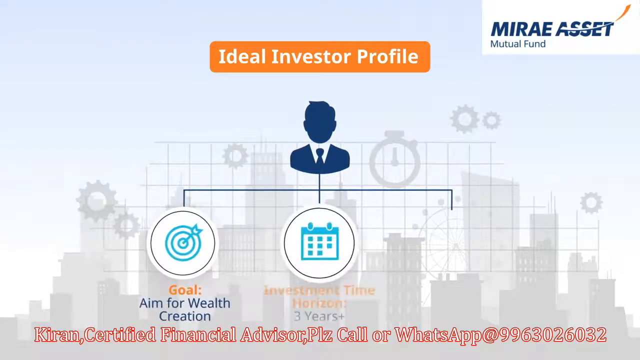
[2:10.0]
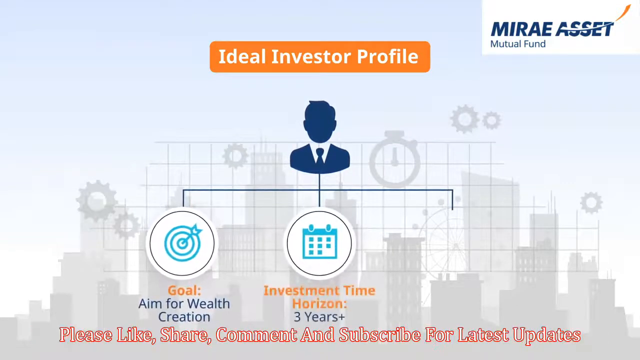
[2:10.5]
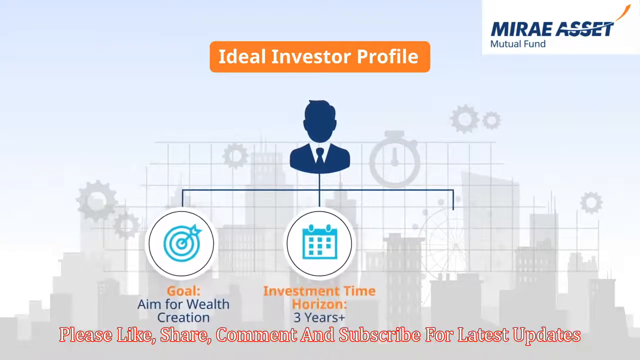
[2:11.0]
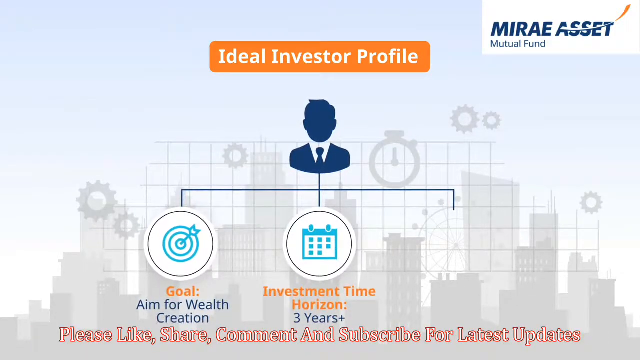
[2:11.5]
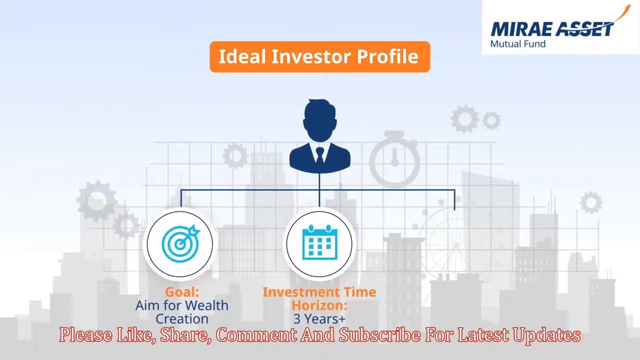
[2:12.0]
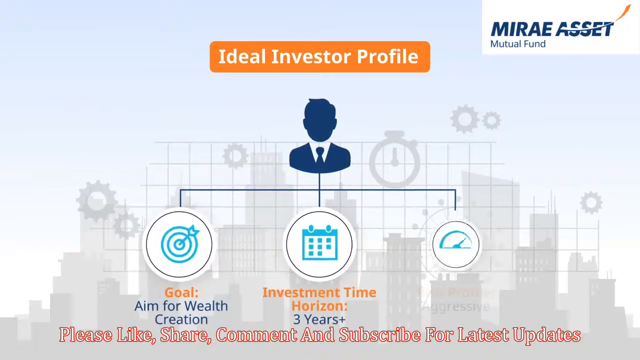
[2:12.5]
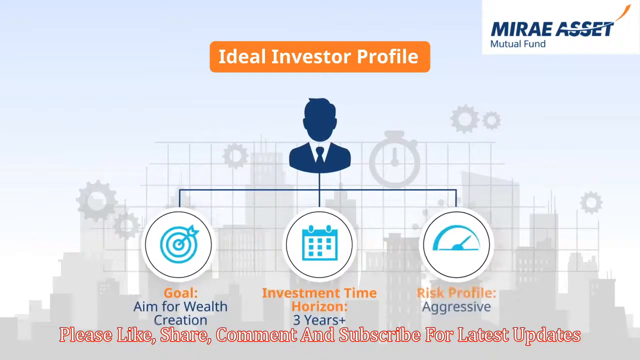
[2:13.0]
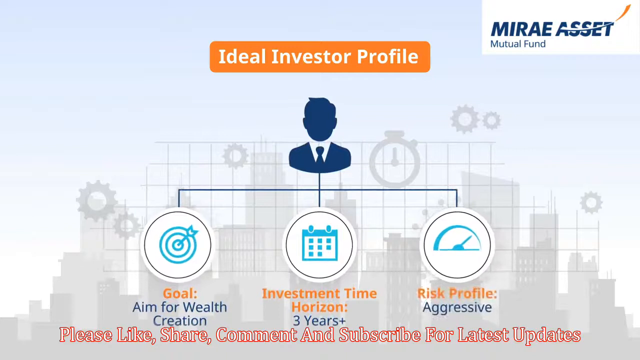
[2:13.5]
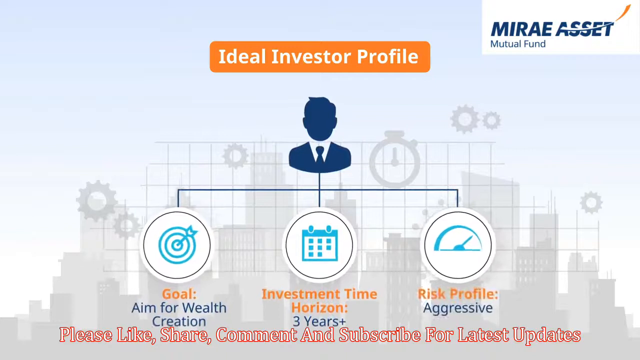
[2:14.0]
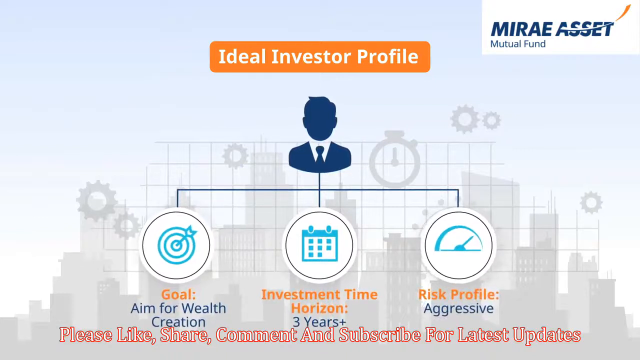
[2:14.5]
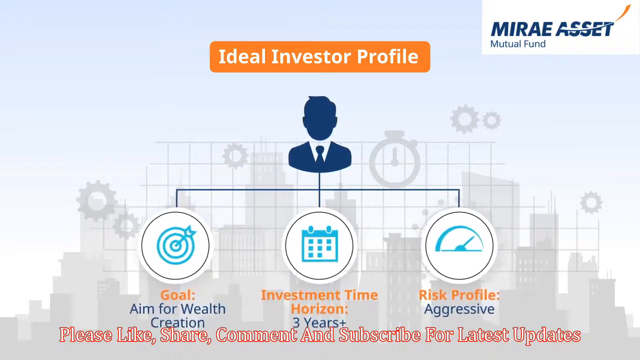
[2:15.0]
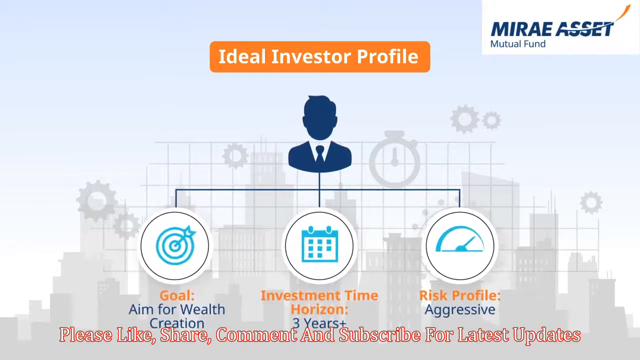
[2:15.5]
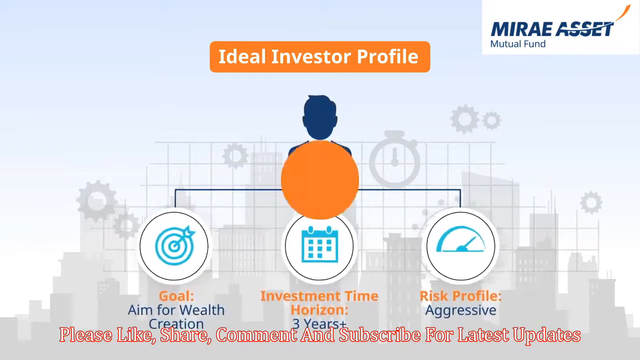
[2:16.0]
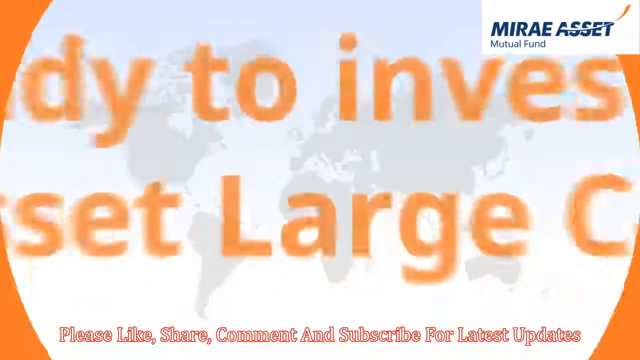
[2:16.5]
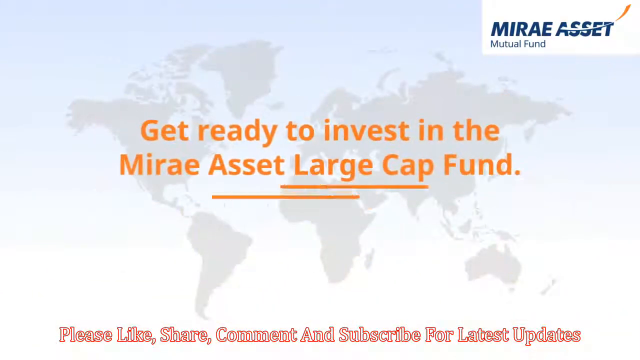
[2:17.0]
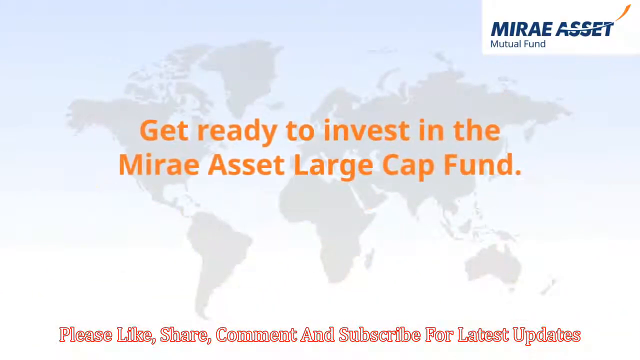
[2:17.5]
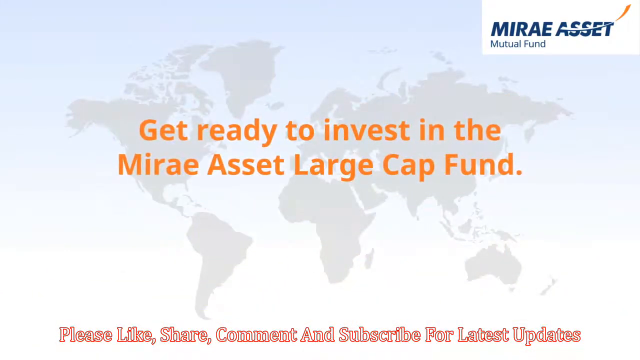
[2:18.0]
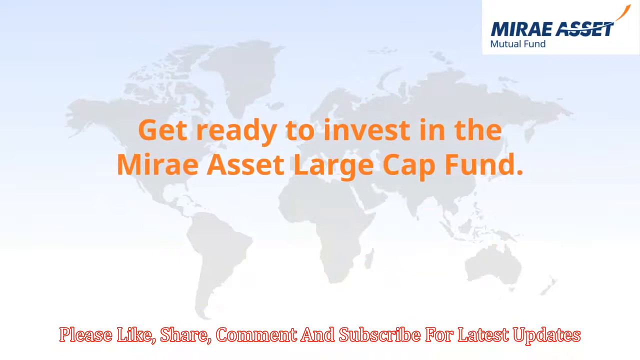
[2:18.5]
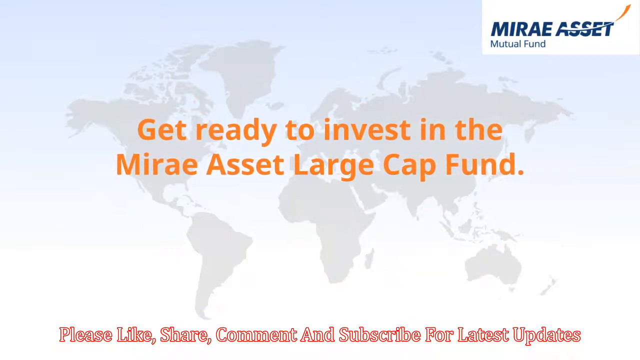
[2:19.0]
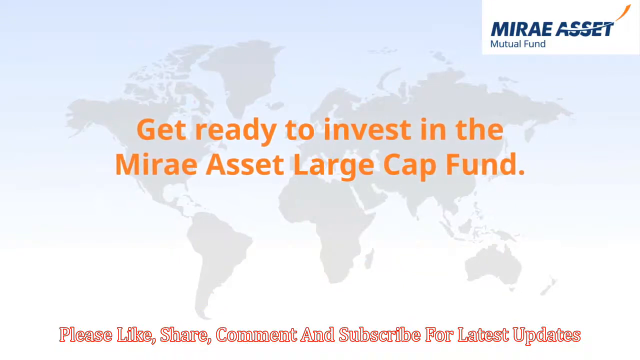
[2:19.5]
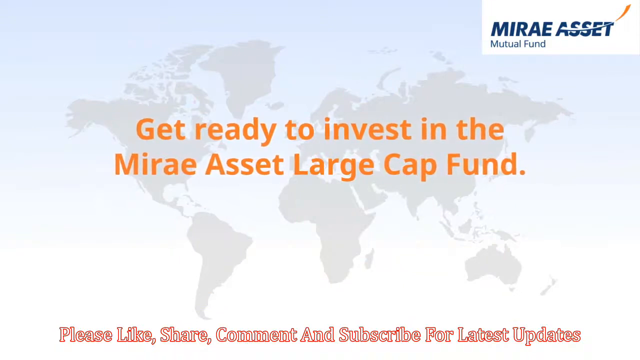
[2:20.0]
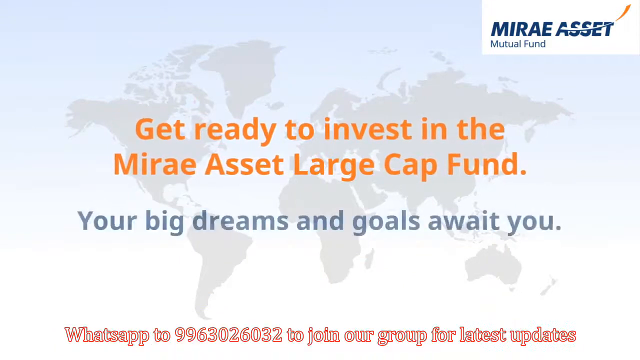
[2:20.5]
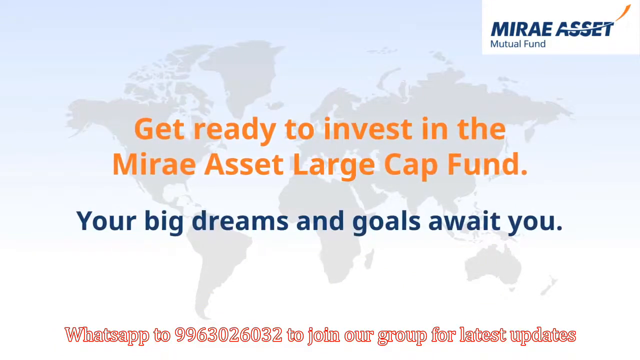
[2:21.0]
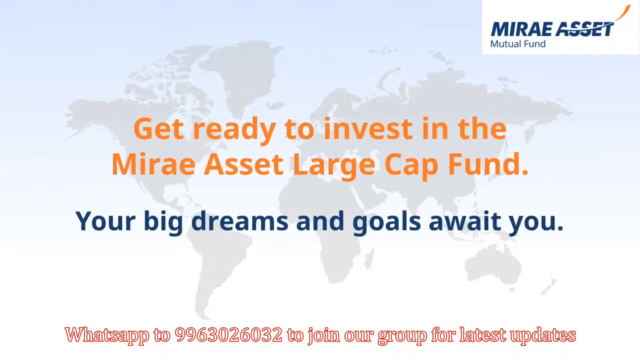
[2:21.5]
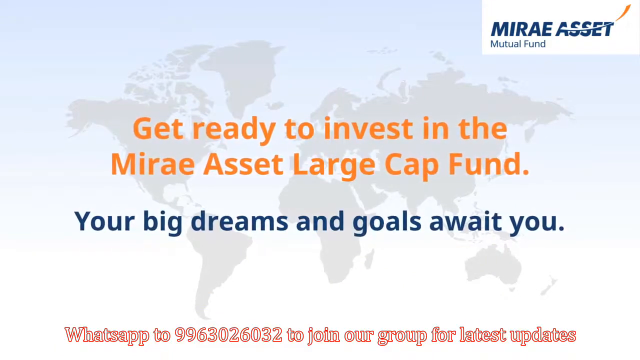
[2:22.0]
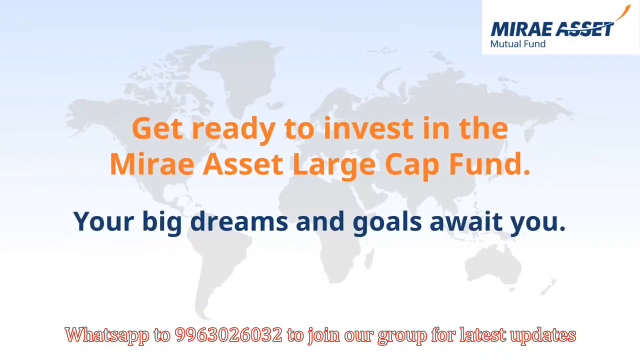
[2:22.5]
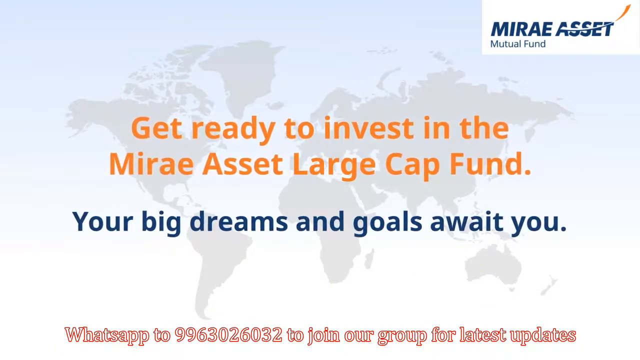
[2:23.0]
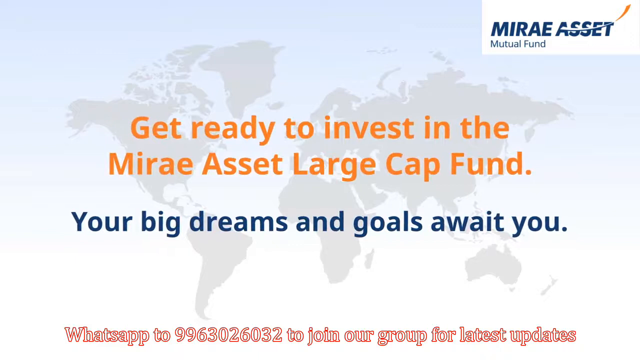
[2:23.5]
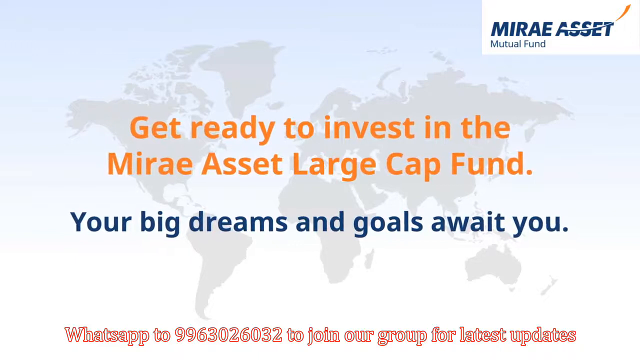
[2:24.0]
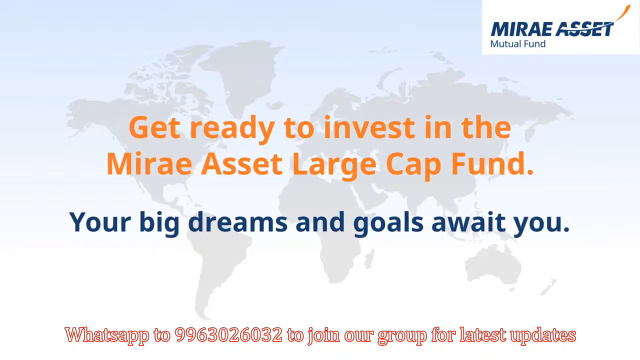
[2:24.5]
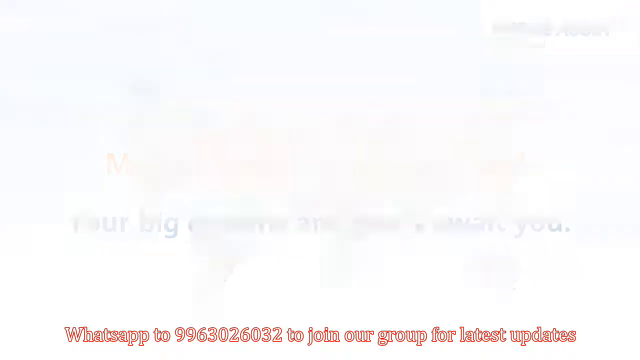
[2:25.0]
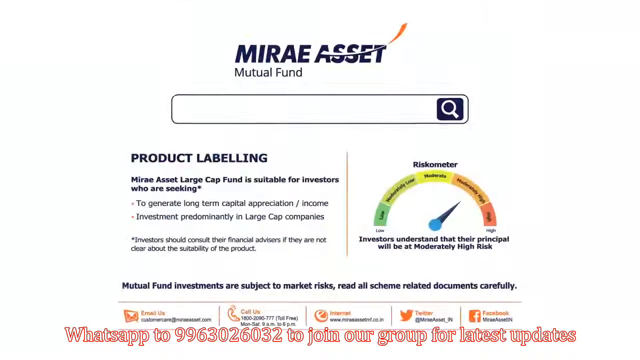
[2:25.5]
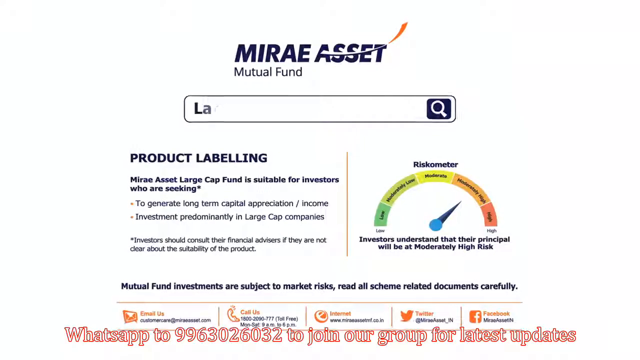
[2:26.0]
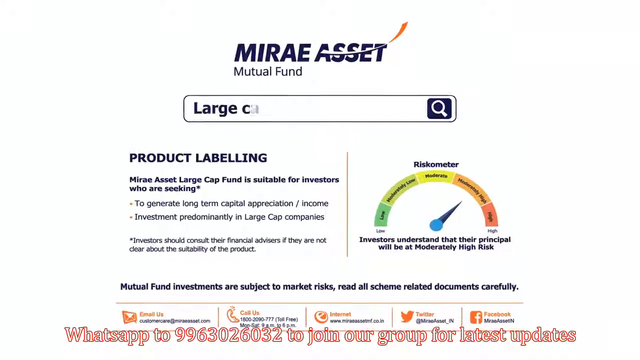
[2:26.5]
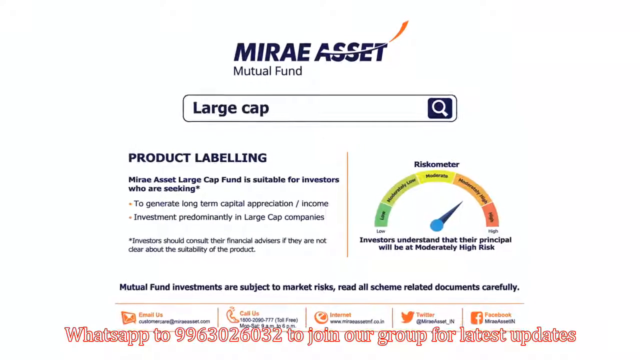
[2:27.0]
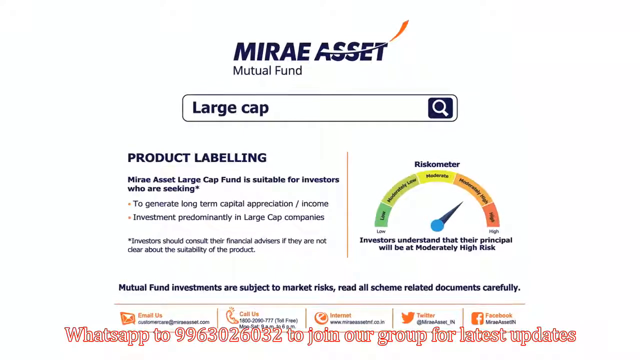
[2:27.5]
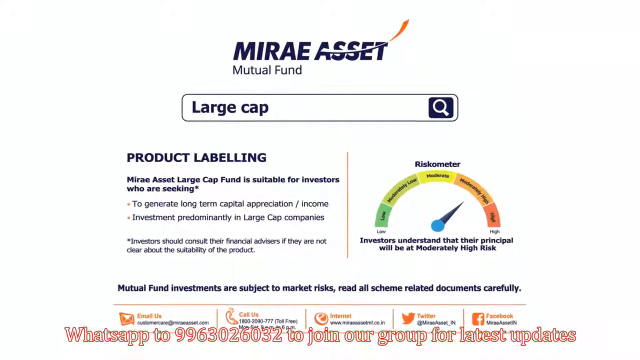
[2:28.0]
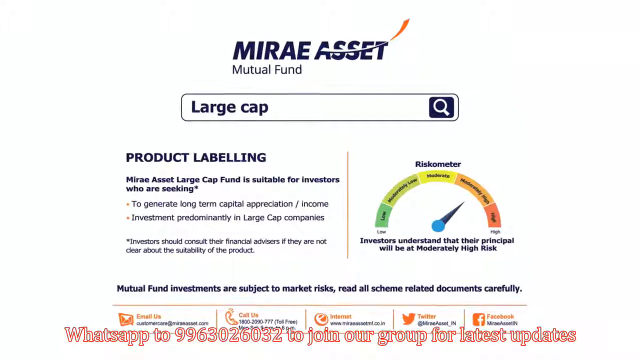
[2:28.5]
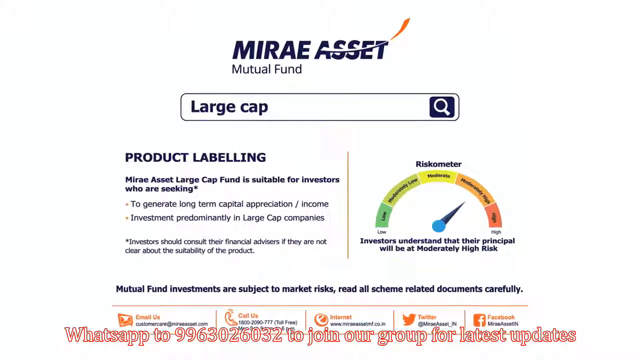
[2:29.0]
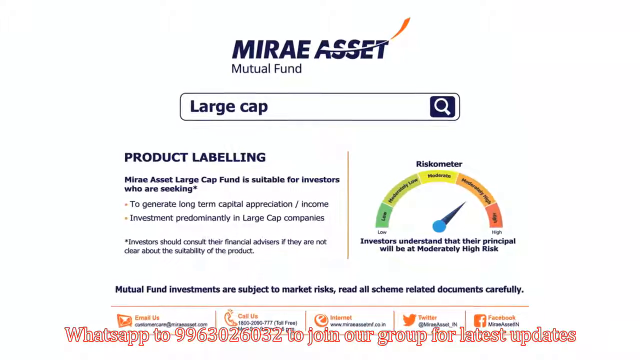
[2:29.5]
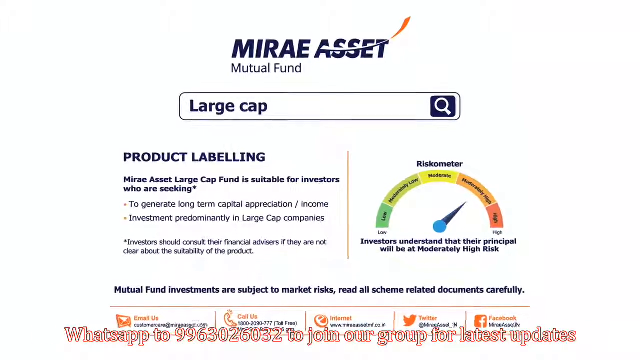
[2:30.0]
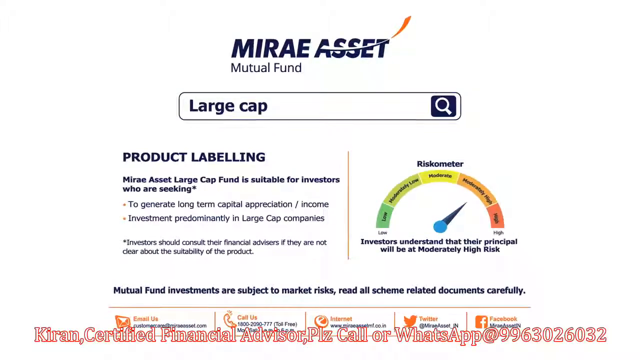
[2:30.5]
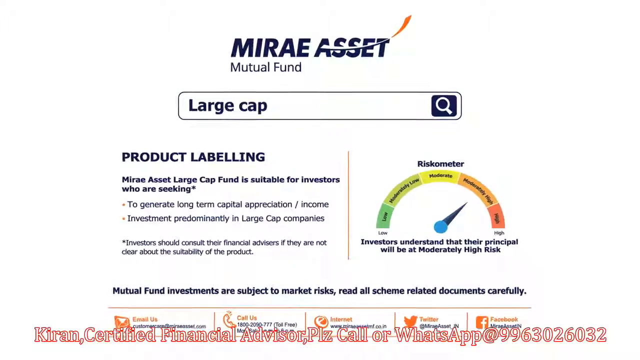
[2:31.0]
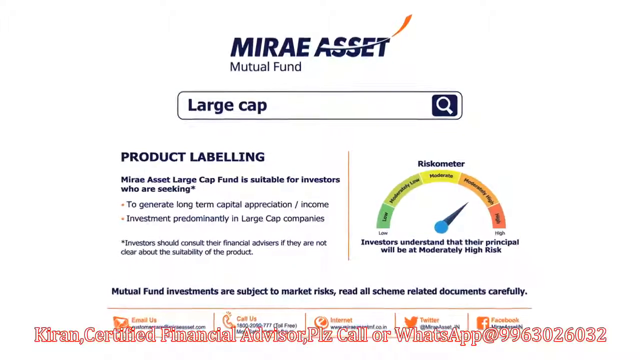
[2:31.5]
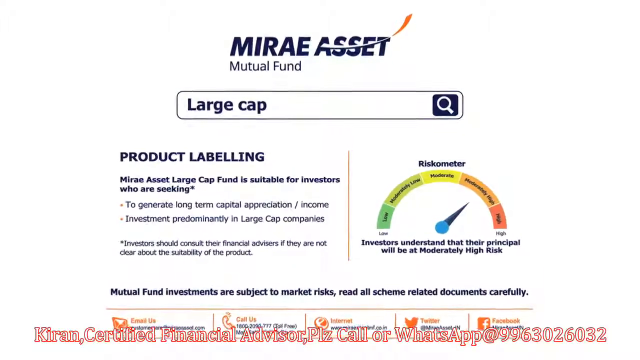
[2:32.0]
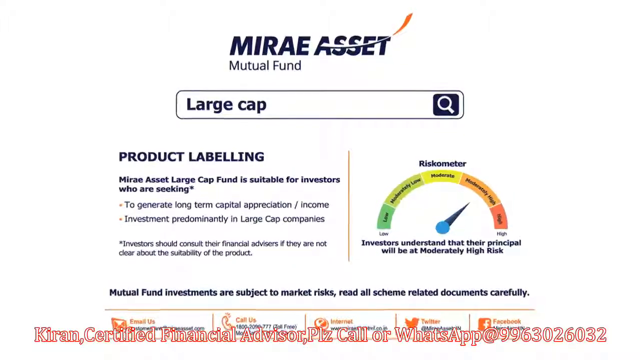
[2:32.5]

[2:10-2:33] The orange "Ideal Investor Profile" banner is at the top with the man underneath it, and icons now branch off from him, one to the left and one underneath in the center. The first shows the bullseye with "Goal" in orange and "Aim for Wealth Creation". The second shows the calendar with "Investment Time Horizon" in orange and, underneath in blue, "one year approximately". The third branch fills in, showing a speedometer with "Risk Profile" in orange and then "Aggressive". The next screen reads "Get Ready to Invest in the Mirae Asset Large Cap Fund, your big dreams and goals await you." It then moves quickly to a screen showing "Mirae Asset Mutual Fund" in blue at the top and "Large Cap" in a search bar.